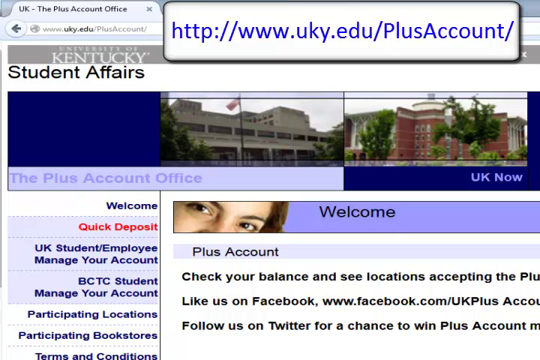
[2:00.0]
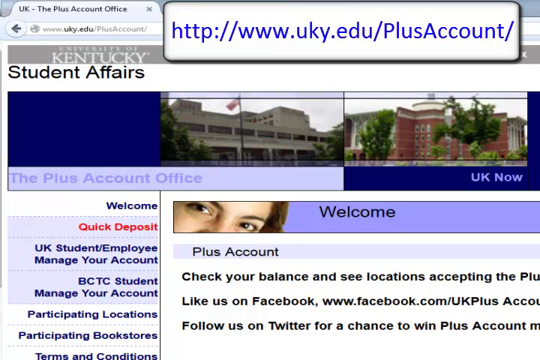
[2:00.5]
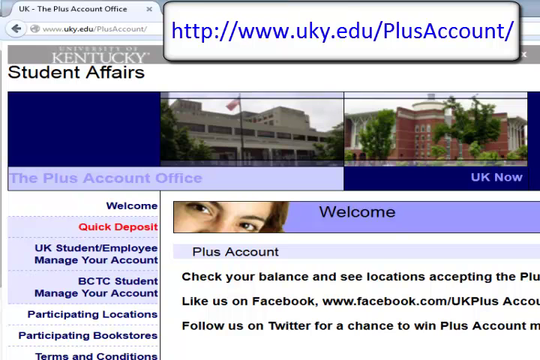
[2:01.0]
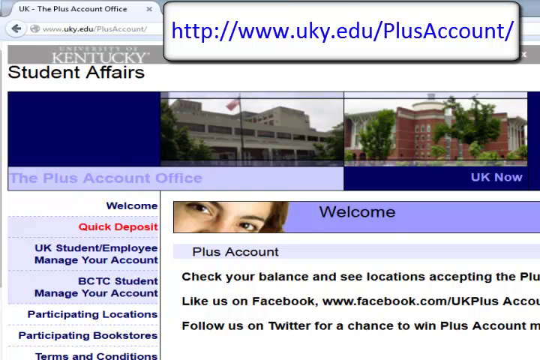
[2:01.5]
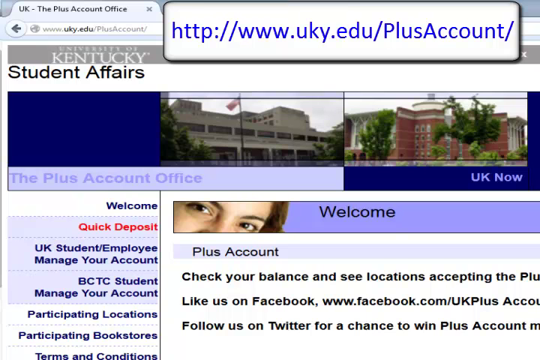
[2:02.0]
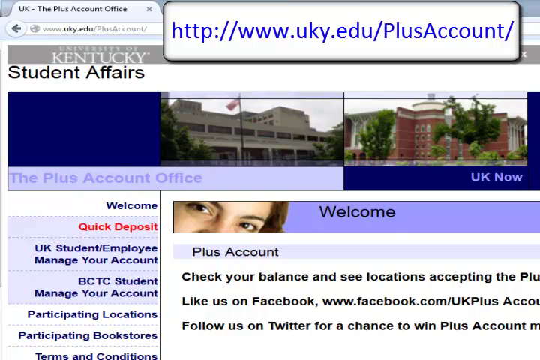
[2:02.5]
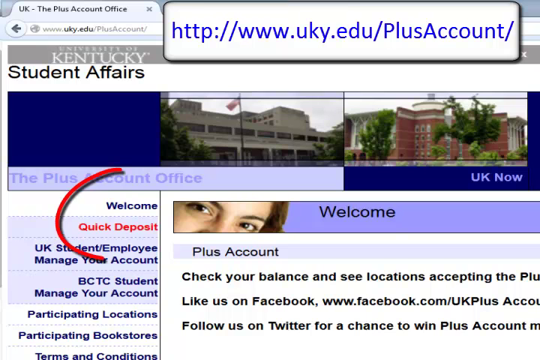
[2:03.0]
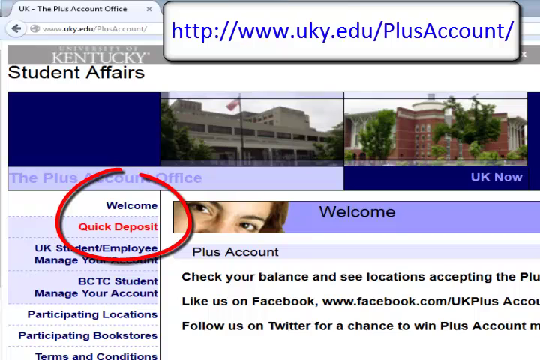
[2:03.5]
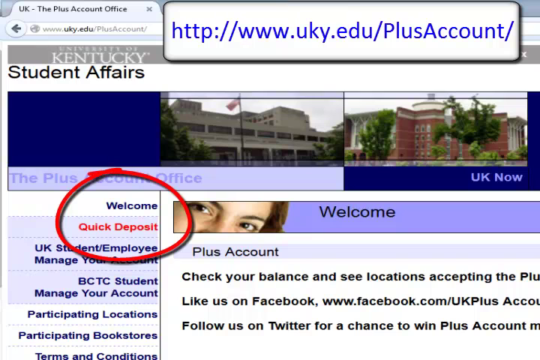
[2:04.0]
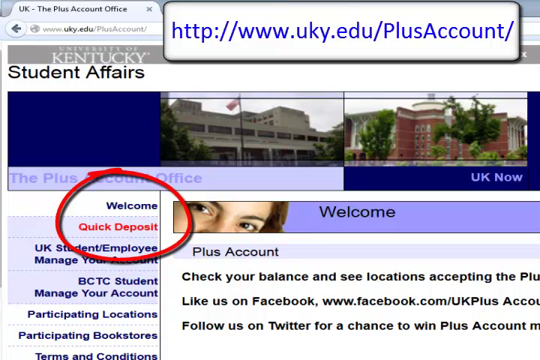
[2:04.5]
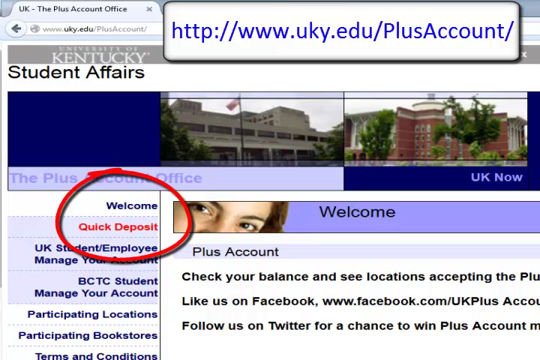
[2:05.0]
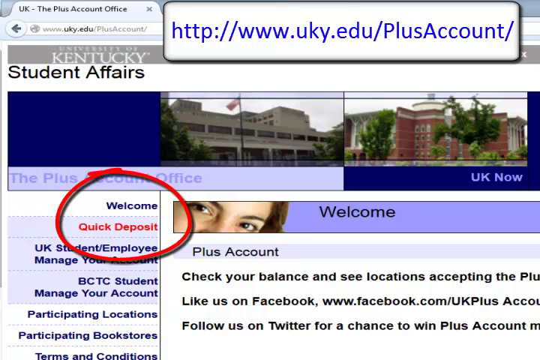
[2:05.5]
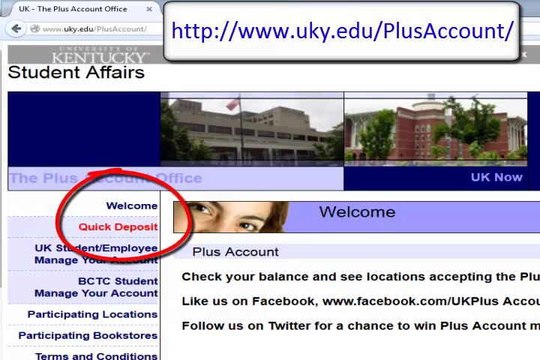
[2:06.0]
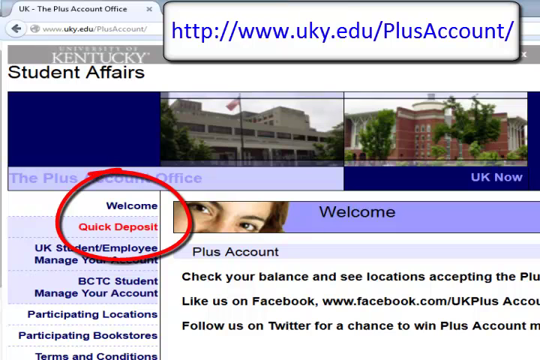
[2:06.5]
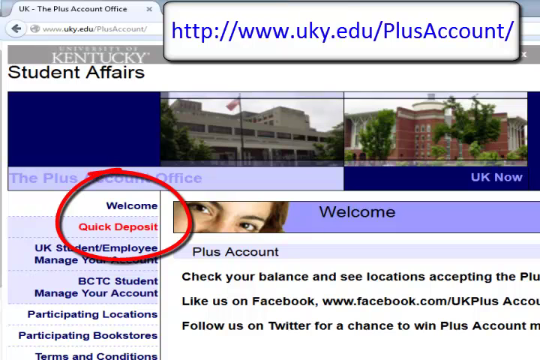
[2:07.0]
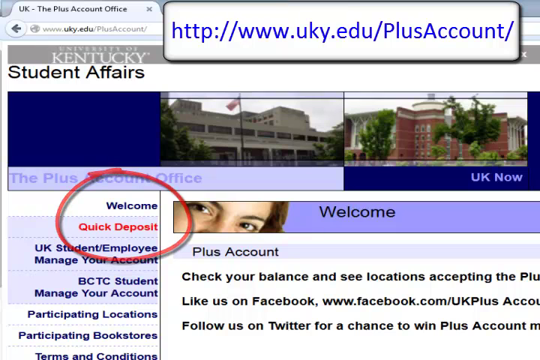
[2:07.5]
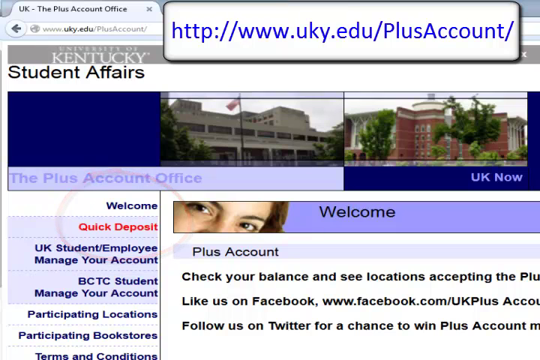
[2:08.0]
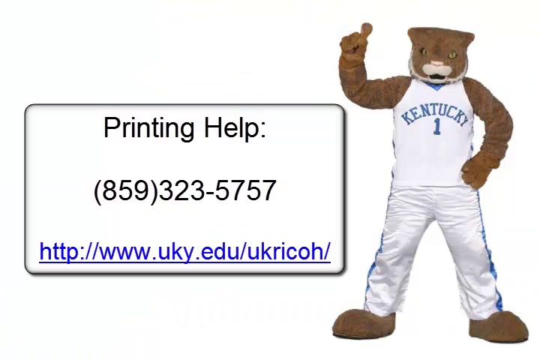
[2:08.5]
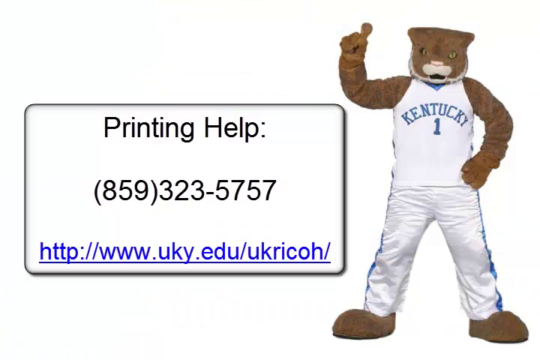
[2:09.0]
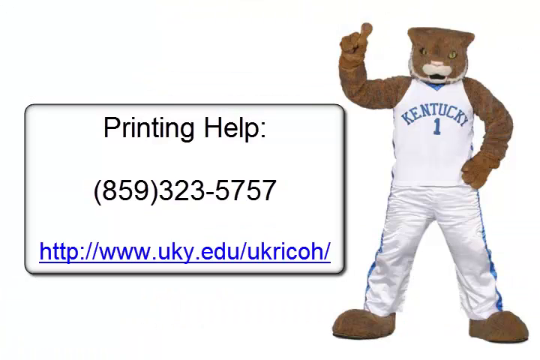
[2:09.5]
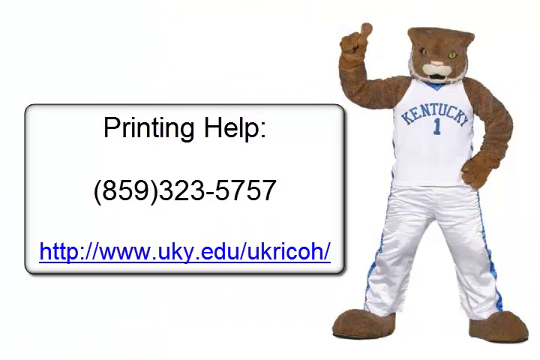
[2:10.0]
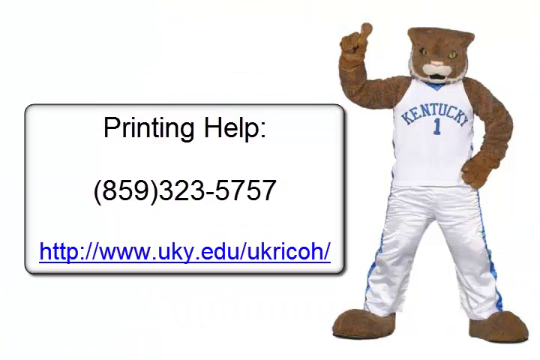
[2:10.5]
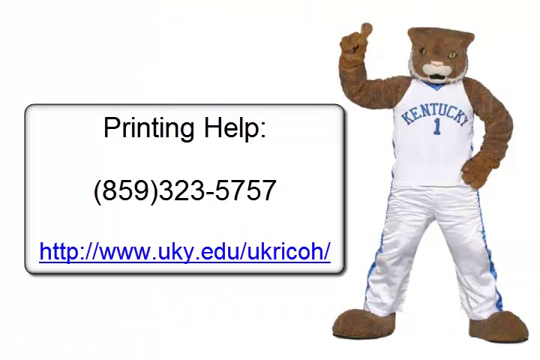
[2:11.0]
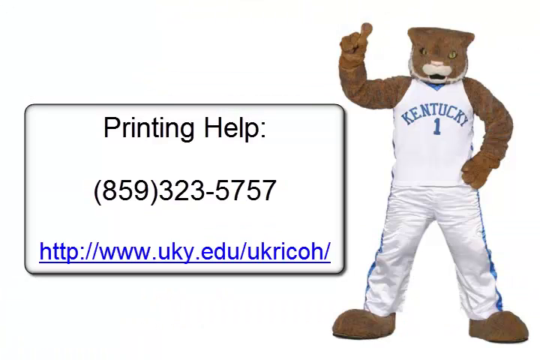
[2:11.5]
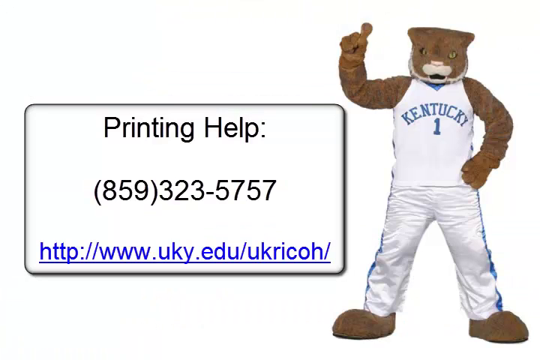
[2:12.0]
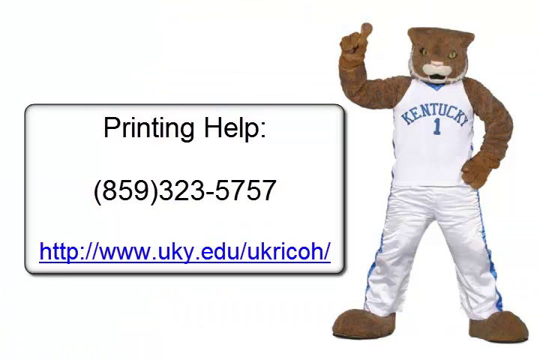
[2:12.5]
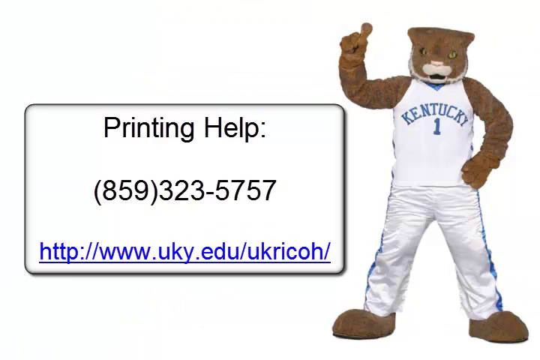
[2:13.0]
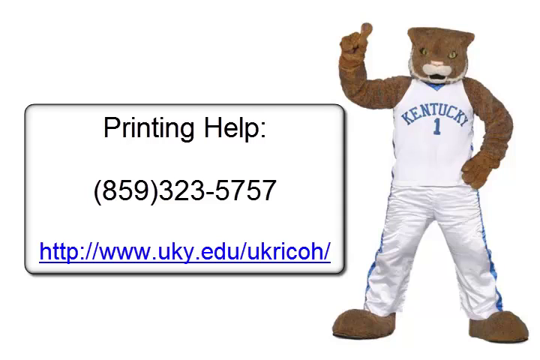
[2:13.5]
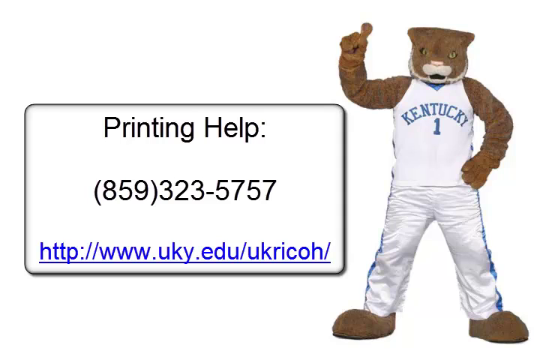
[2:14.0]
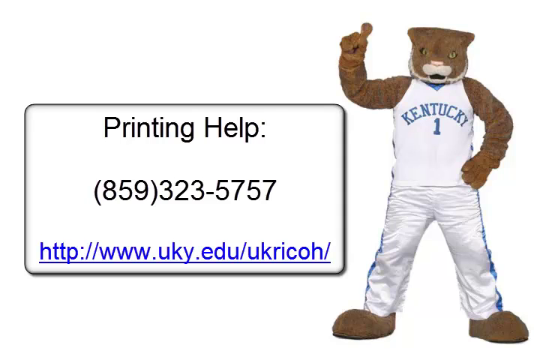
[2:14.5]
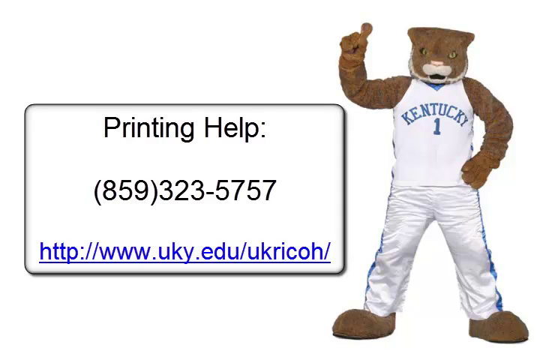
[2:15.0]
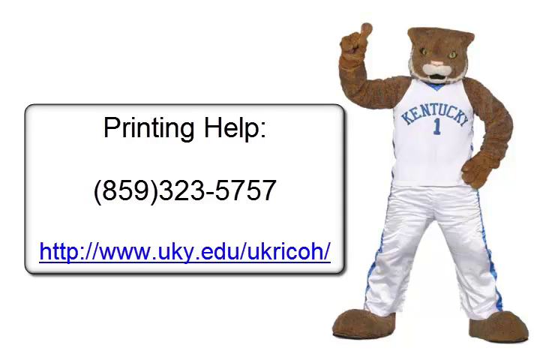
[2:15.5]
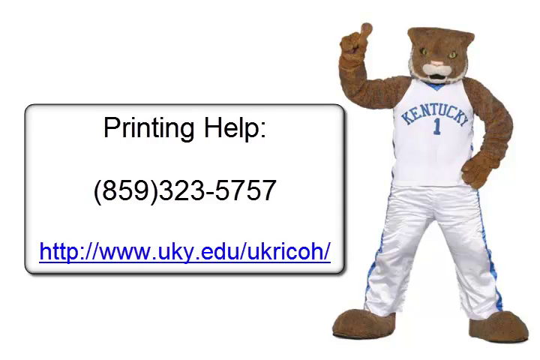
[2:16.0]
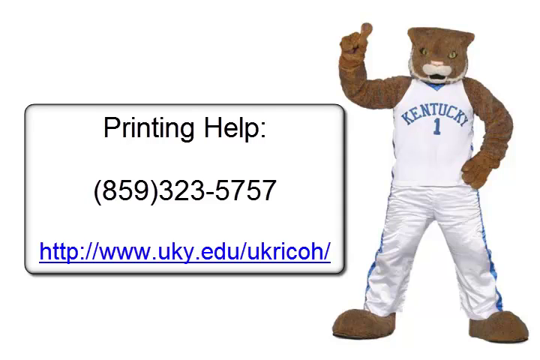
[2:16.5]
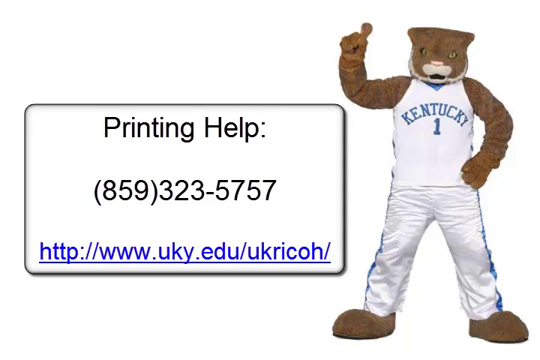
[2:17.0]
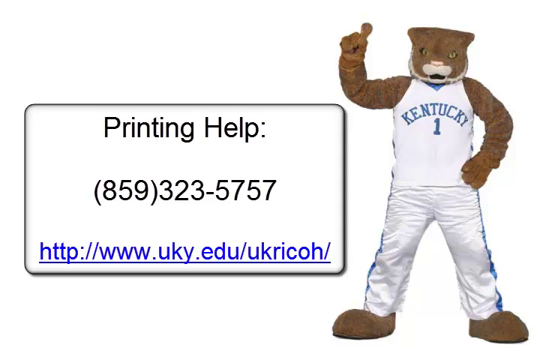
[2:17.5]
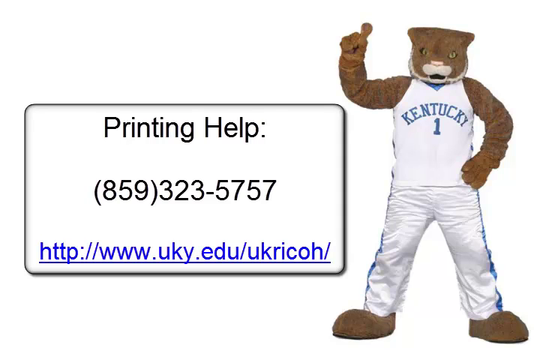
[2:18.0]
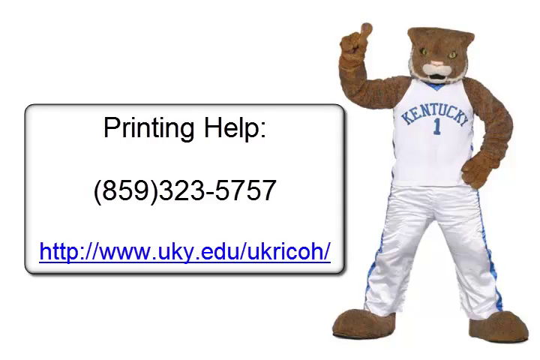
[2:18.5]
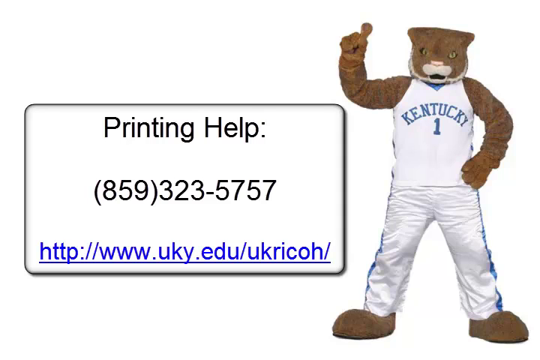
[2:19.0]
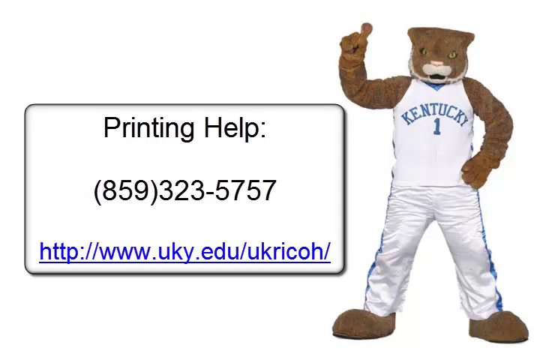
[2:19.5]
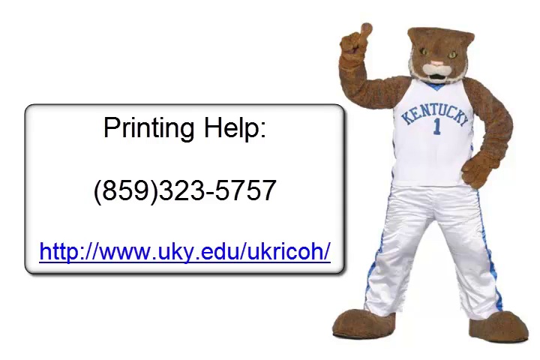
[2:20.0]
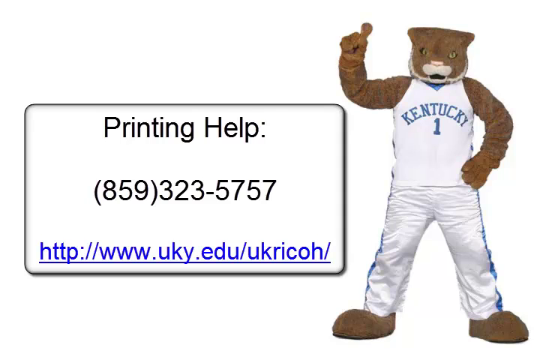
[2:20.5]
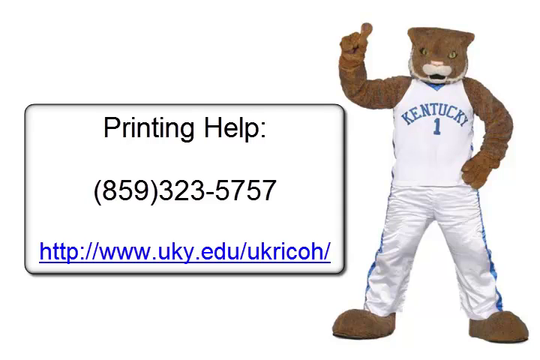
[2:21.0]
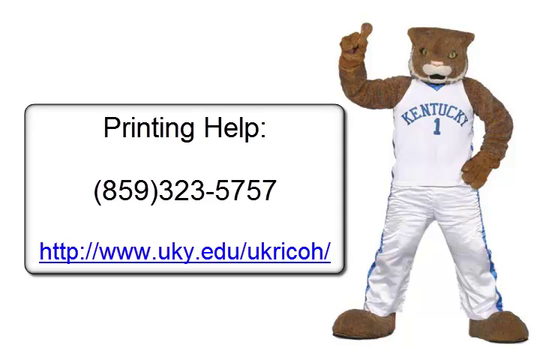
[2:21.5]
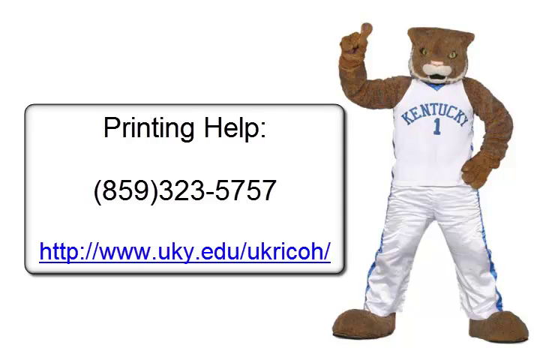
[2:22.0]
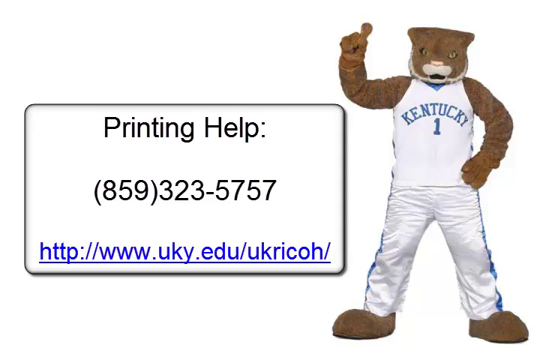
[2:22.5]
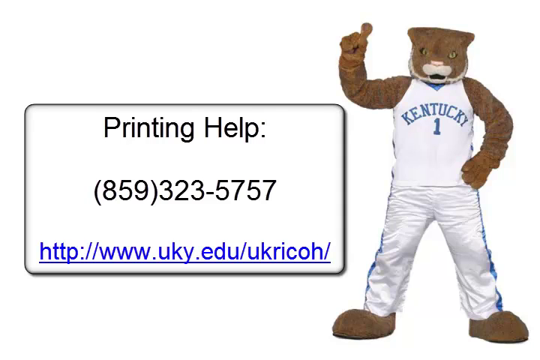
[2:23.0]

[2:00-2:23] The instructional video from the University of Kentucky Library on mobile printing continues on the University of Kentucky Student Affairs website, which says "the Plus Account Office". A pop-up window shows a white banner with blue font reading "HTTP://www.uky.edu/Plus Account/". A sidebar lists "Welcome", "Quick Deposit", "UK Student Employee Manager Account" and "BCTC Student Manager Account". A red circle is drawn around the part that says "Welcome" and "Quick Deposit", with "Quick Deposit" in red; the person seems about to select it, possibly to put money in. The video then goes back to a screen with the tiger mascot and a phone number for help.